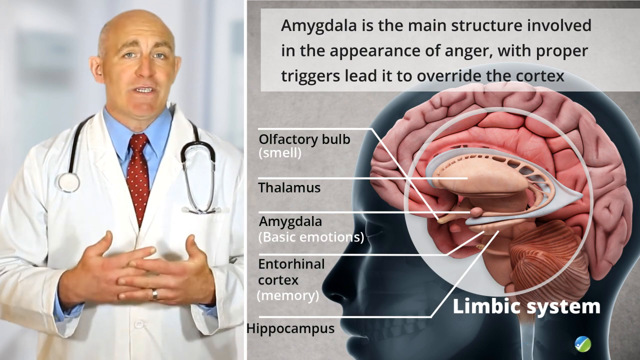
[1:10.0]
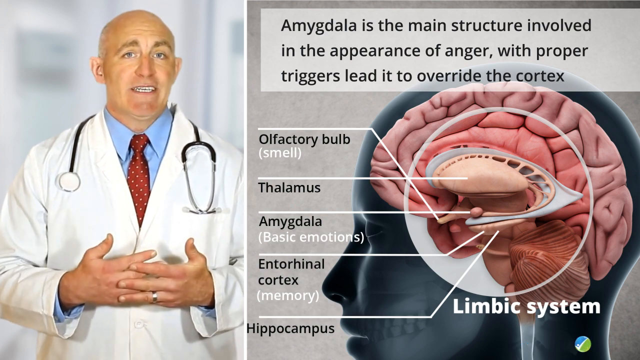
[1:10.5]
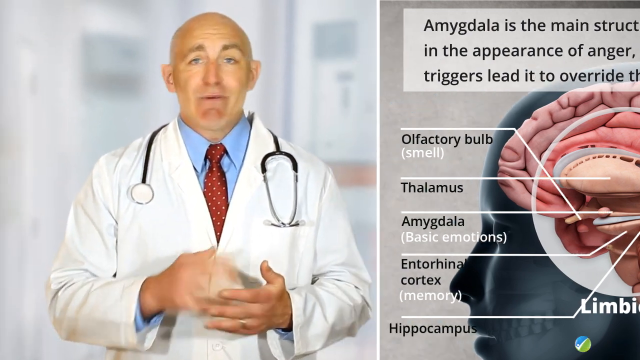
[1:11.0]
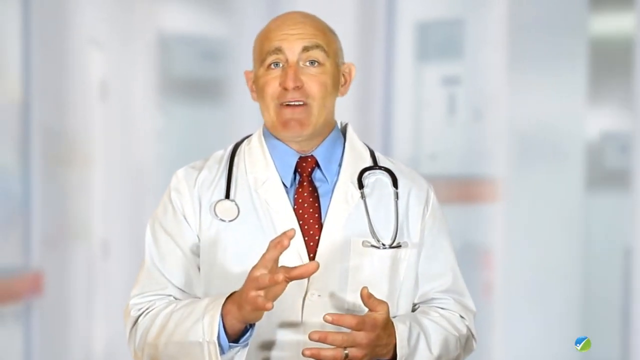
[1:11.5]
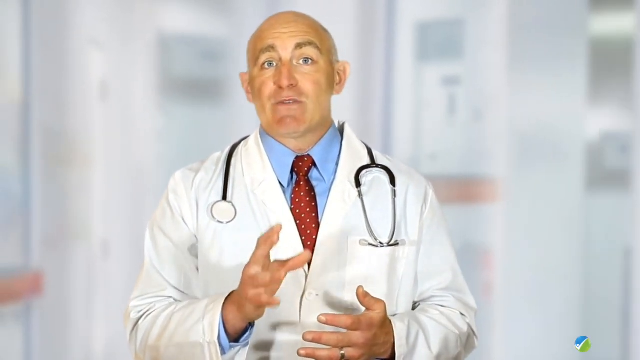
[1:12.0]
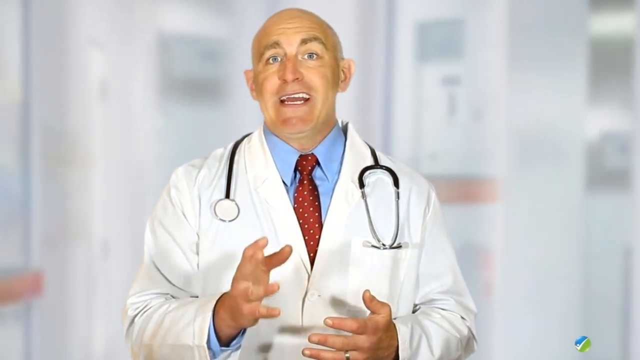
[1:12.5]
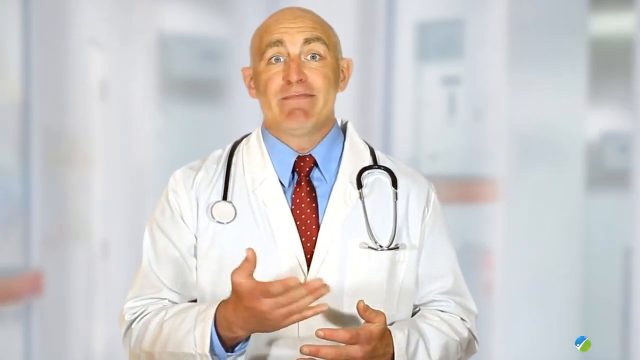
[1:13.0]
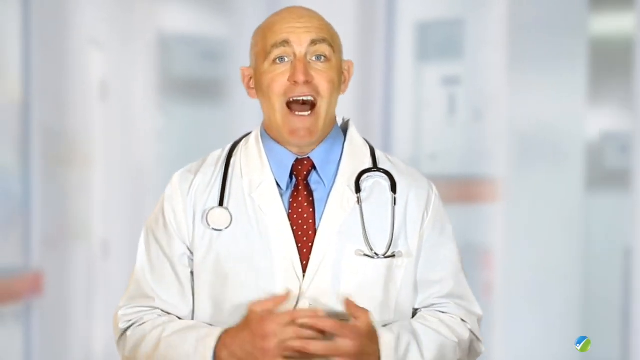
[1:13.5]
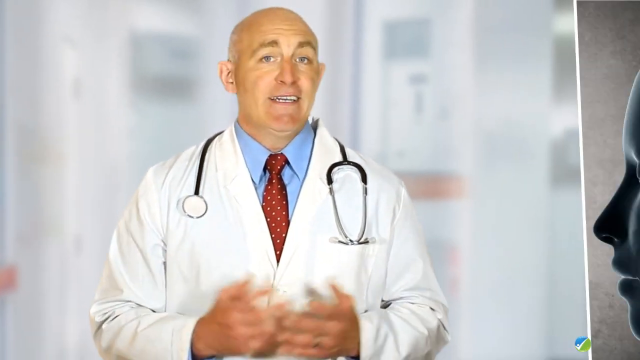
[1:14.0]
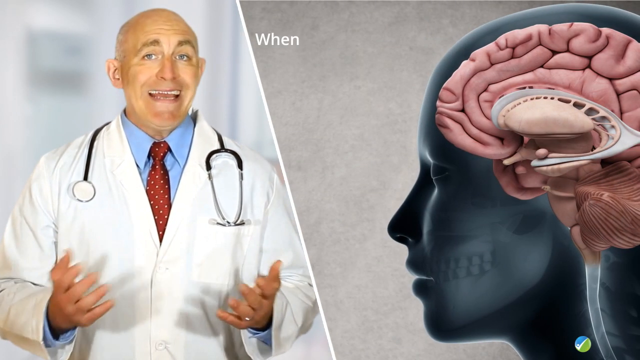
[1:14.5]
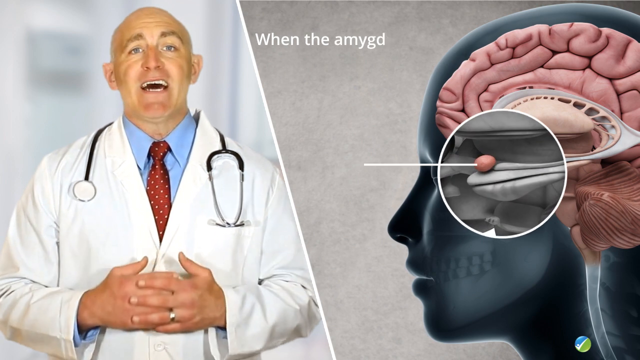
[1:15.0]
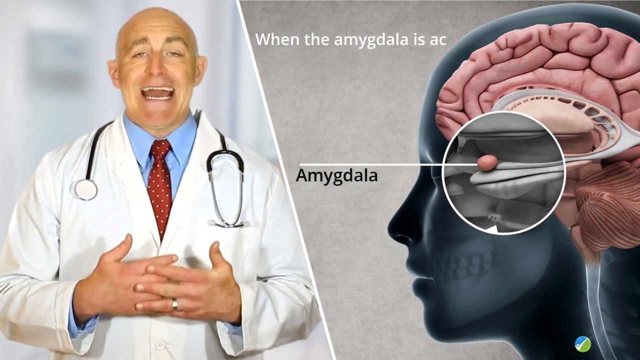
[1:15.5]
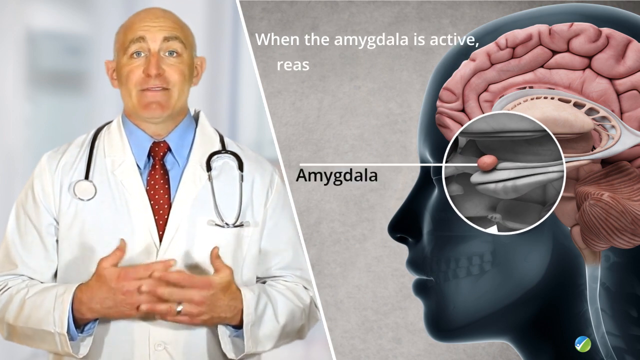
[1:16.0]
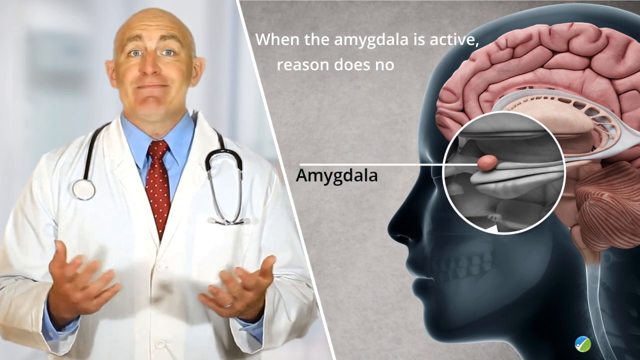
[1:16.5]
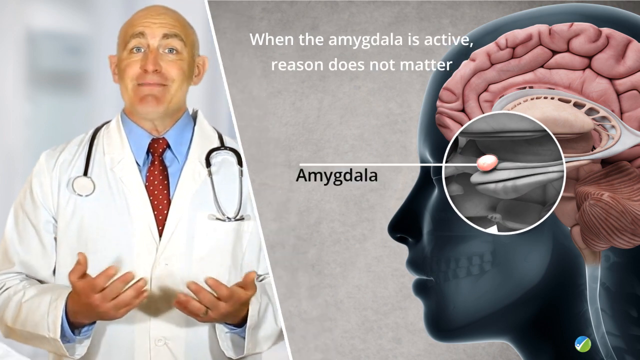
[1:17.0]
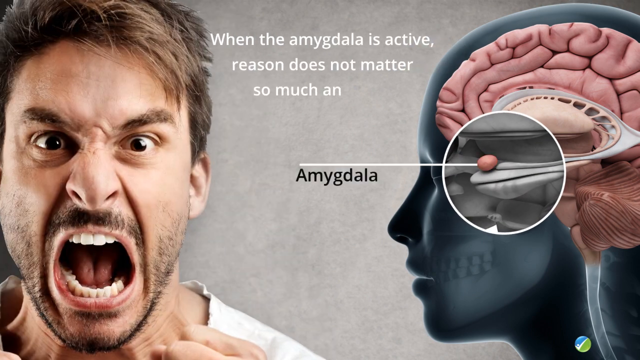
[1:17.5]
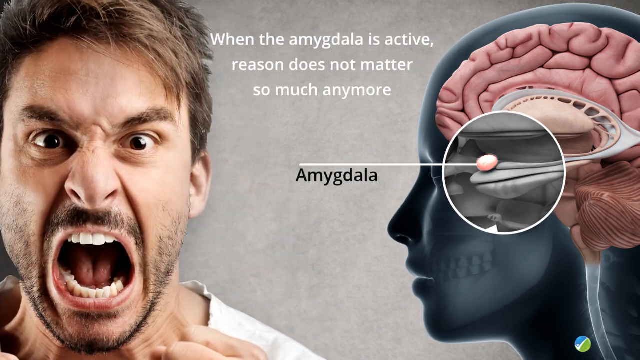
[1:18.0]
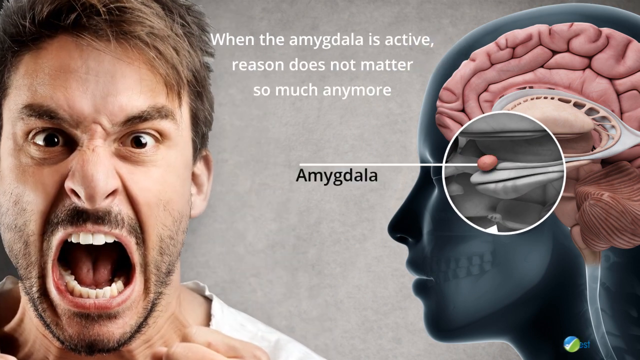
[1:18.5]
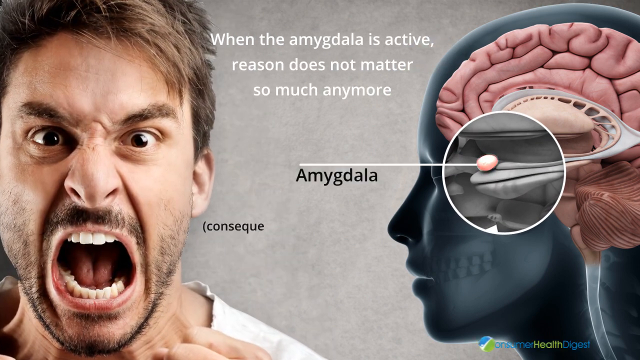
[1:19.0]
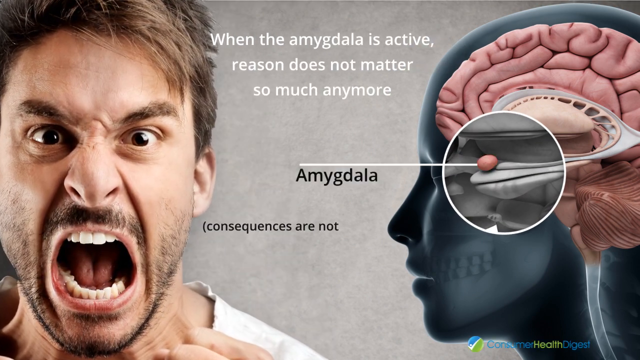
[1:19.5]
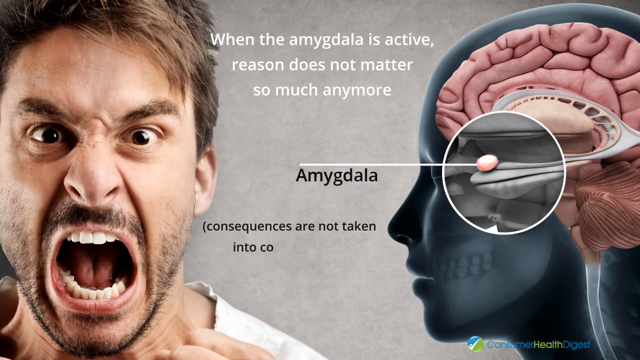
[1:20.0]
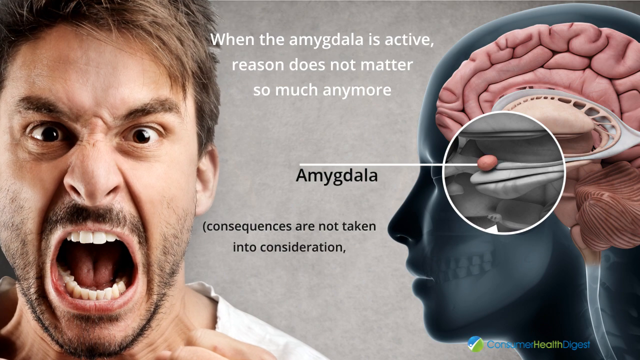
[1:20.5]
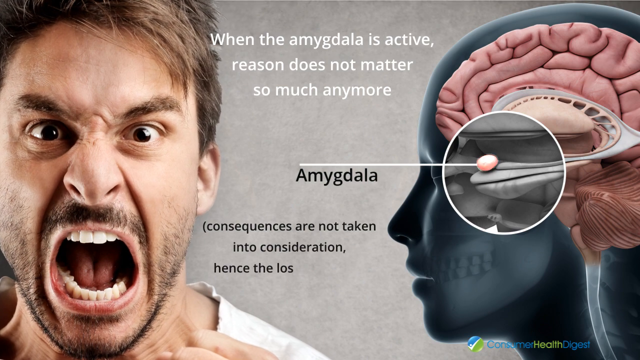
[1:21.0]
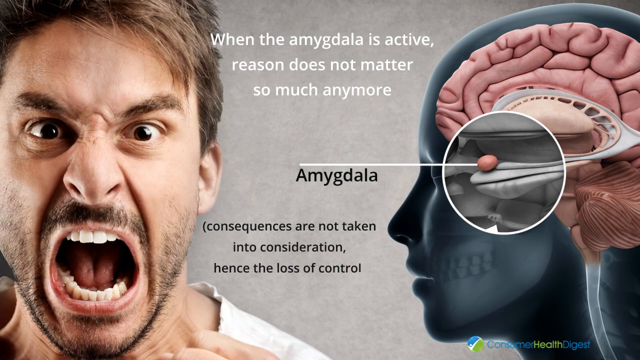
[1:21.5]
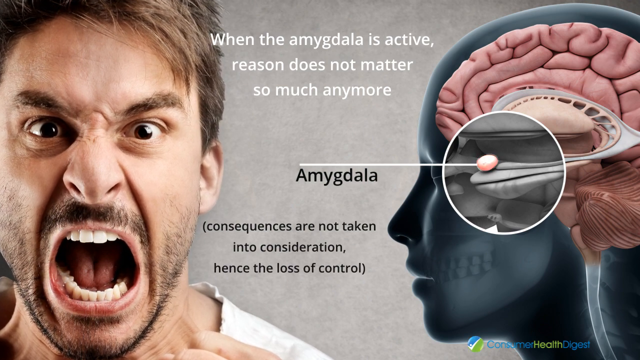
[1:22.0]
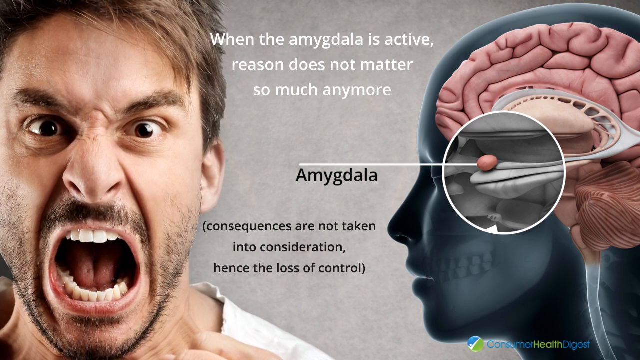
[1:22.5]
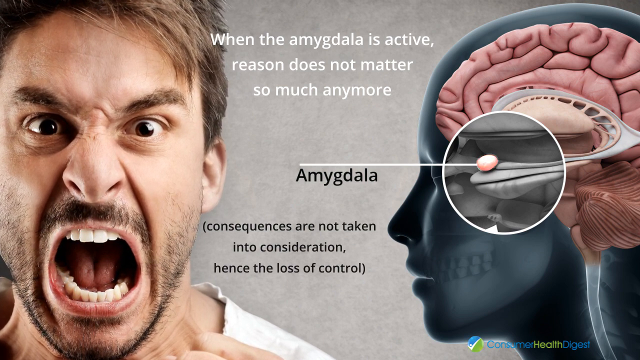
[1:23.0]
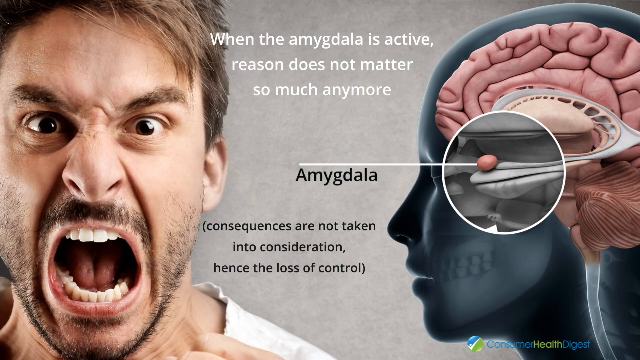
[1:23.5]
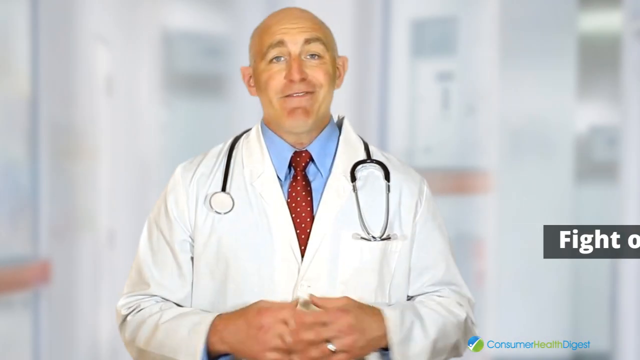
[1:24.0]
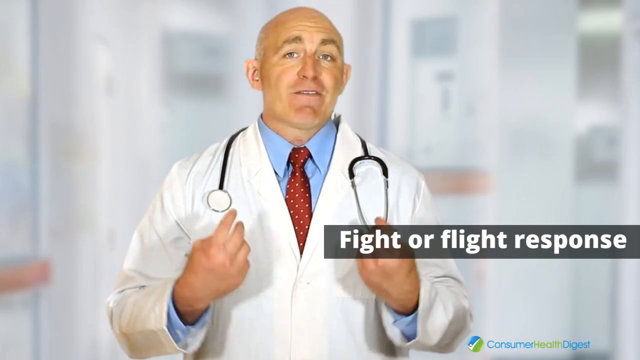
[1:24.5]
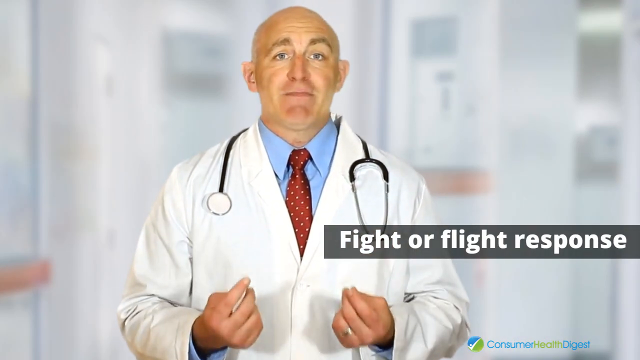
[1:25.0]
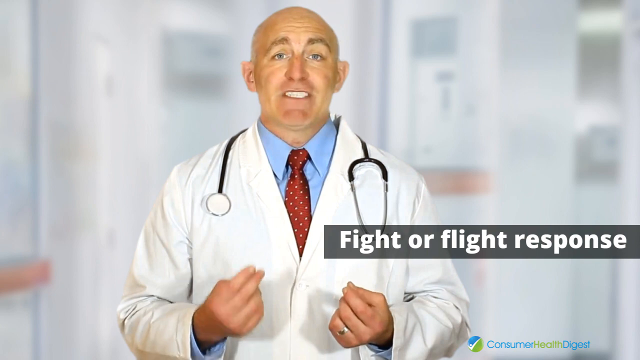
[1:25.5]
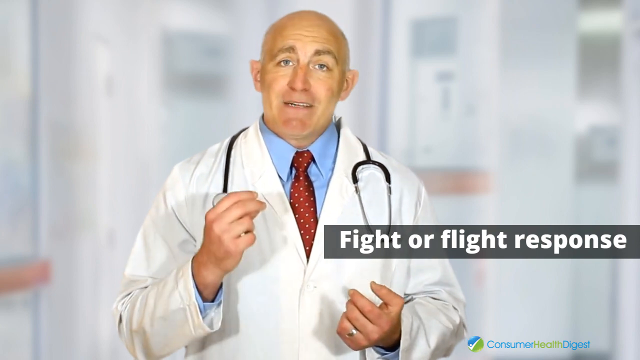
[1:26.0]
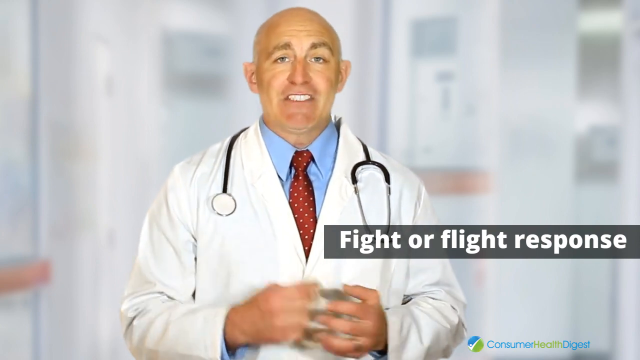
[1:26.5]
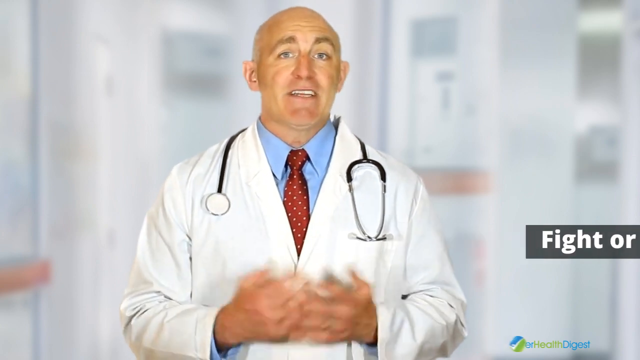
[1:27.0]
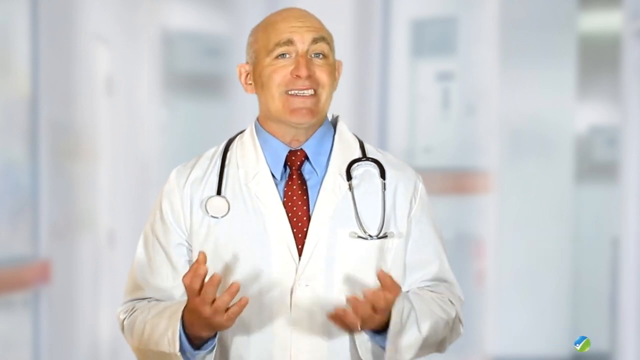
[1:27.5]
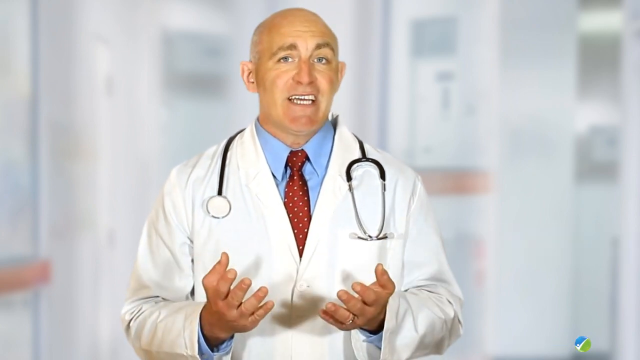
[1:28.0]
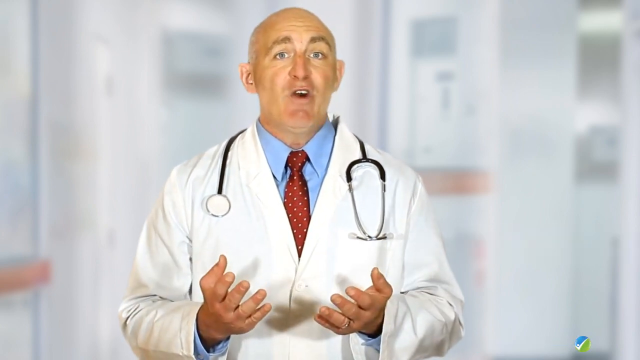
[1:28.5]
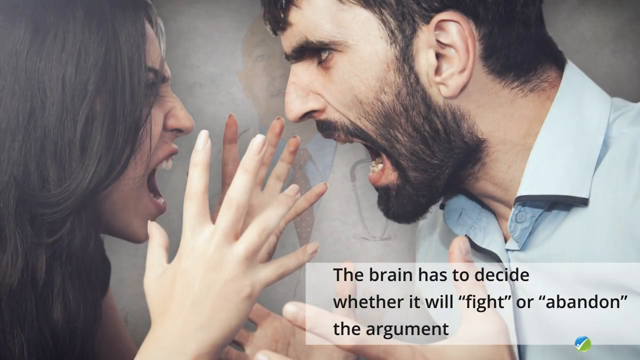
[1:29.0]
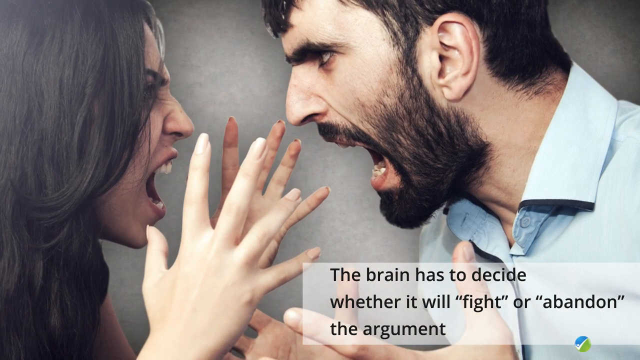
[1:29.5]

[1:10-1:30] The video returns to the doctor, who keeps talking, then moves to a zoomed-in portion of the brain focused on the amygdala, with "amygdala" written in black font pointing at that area. In white font in the center of the screen, text reads "when the amygdala is active a reason does not matter so much anymore." On the left side of the screen is a man's face contorted in rage or anger, and underneath it text reads "consequences are not taken into consideration hence the loss of control." The video comes back to the doctor, who continues his presentation with graphics on the screen that say "fight or flight response." As the doctor talks, an image appears of a couple yelling at each other: a man on the right side with dark hair and a full beard, and a woman on the left side with long black hair.